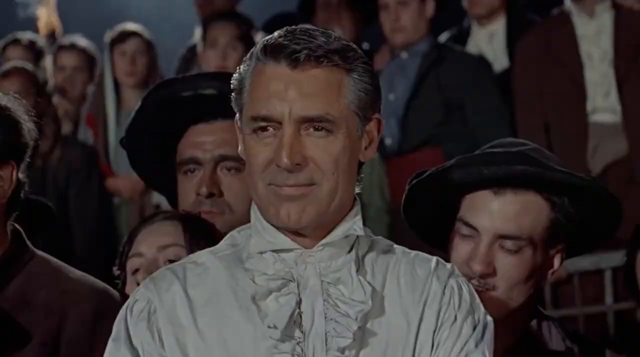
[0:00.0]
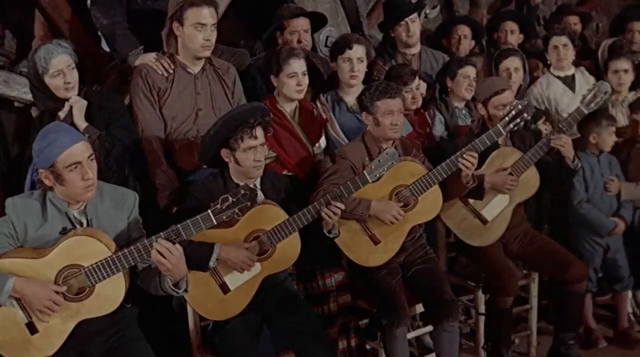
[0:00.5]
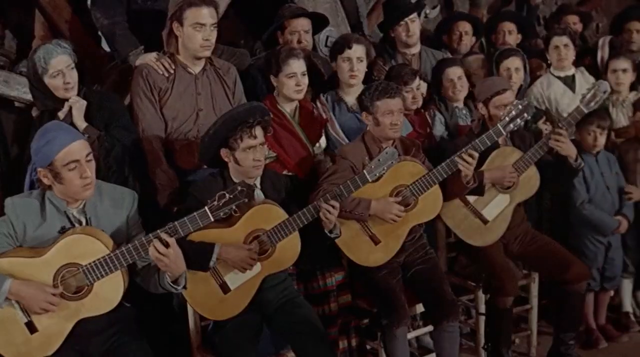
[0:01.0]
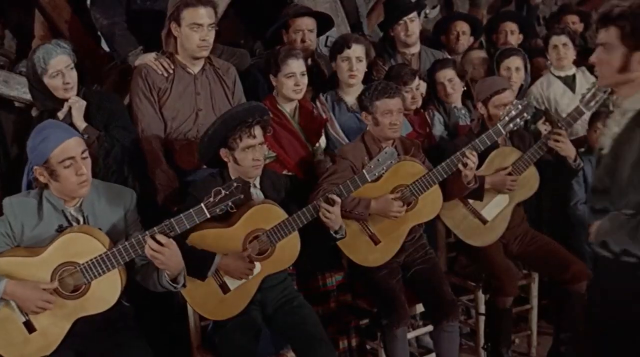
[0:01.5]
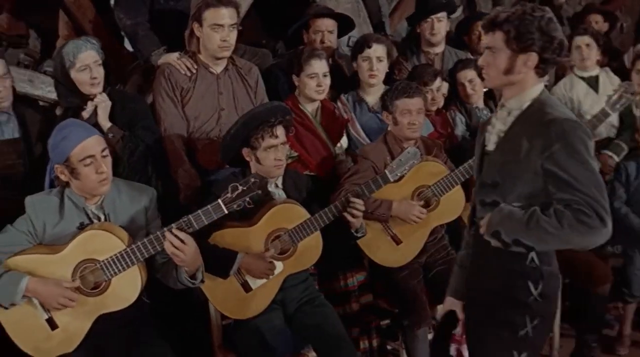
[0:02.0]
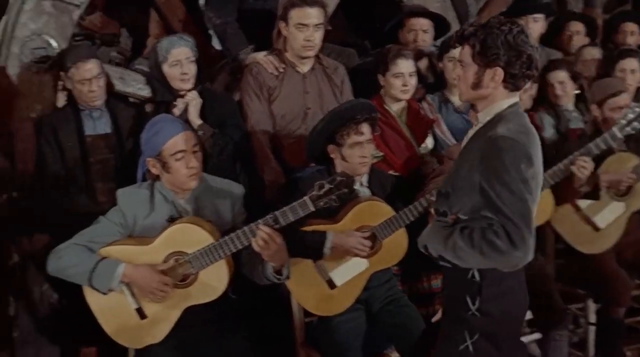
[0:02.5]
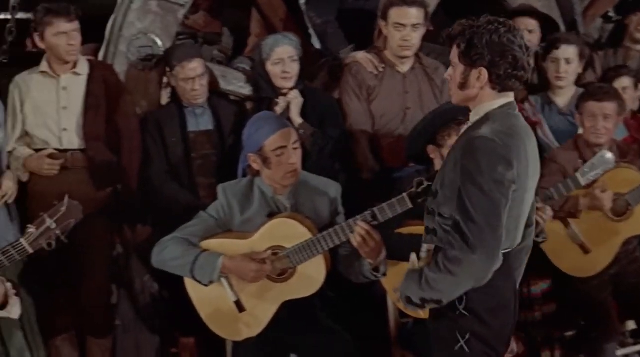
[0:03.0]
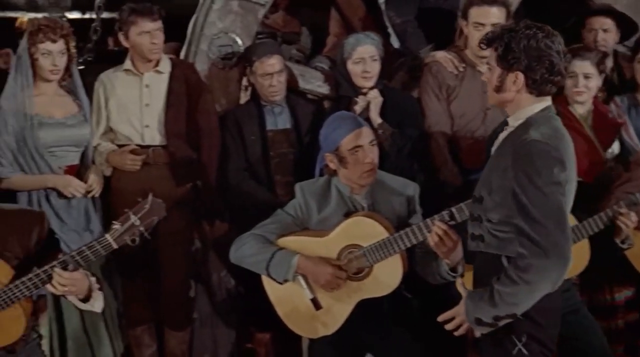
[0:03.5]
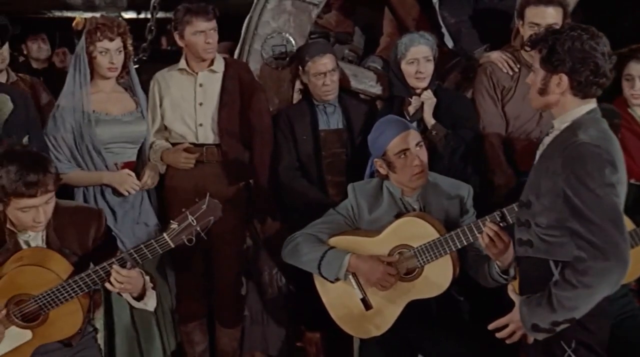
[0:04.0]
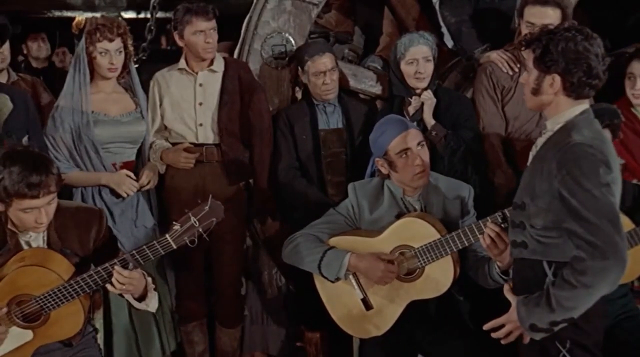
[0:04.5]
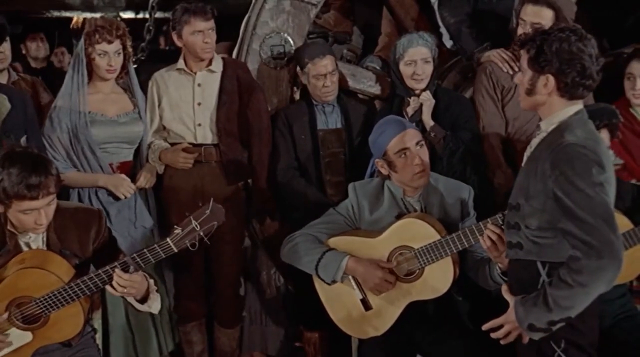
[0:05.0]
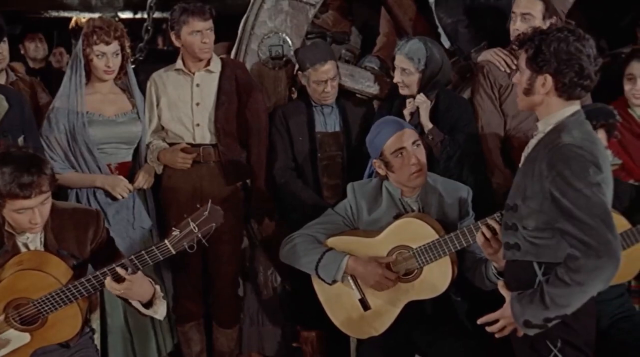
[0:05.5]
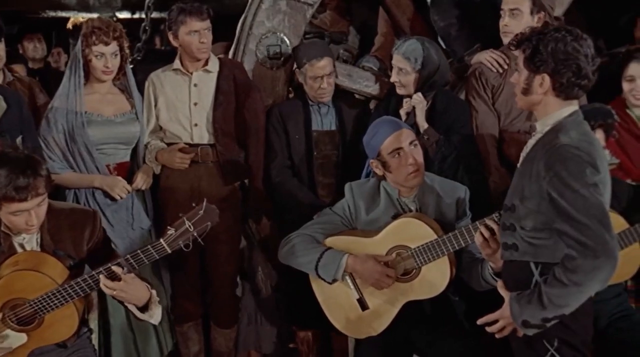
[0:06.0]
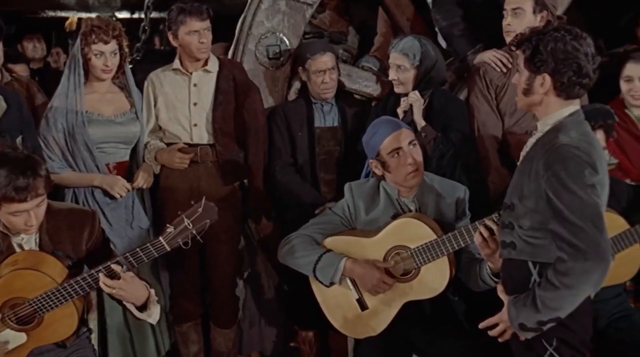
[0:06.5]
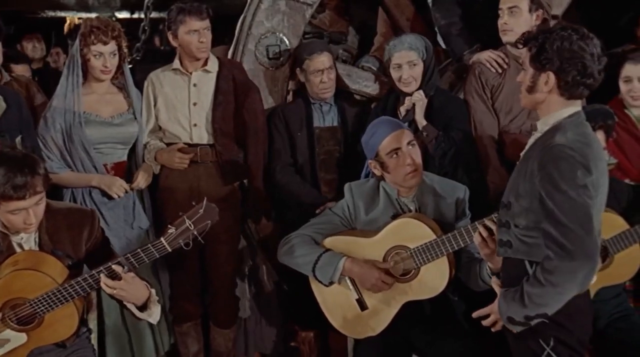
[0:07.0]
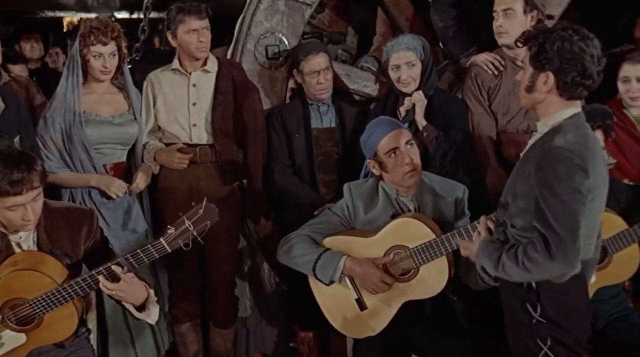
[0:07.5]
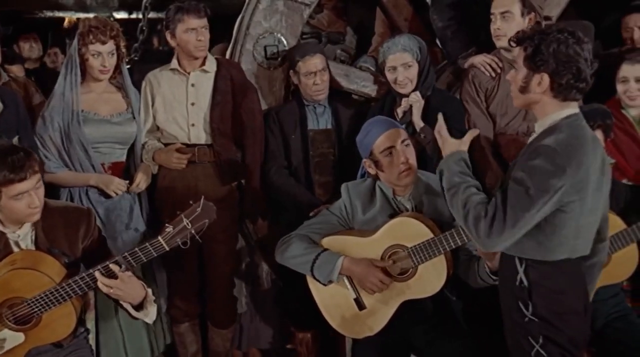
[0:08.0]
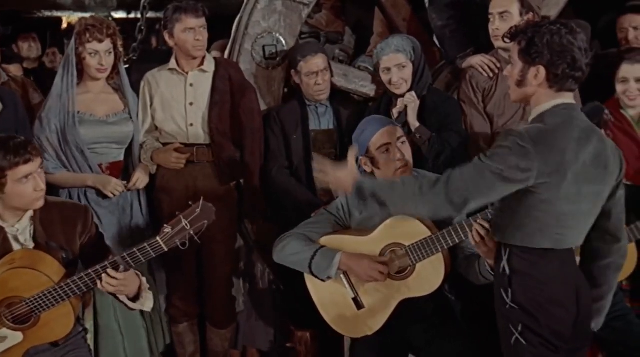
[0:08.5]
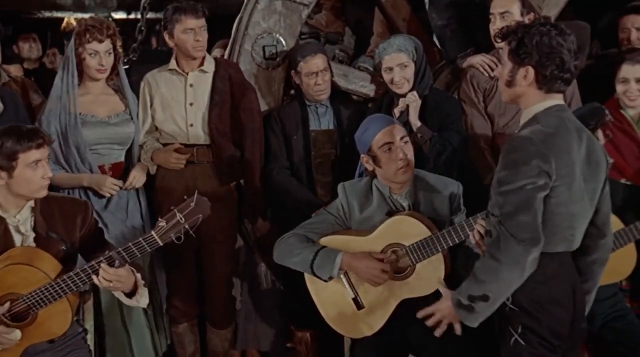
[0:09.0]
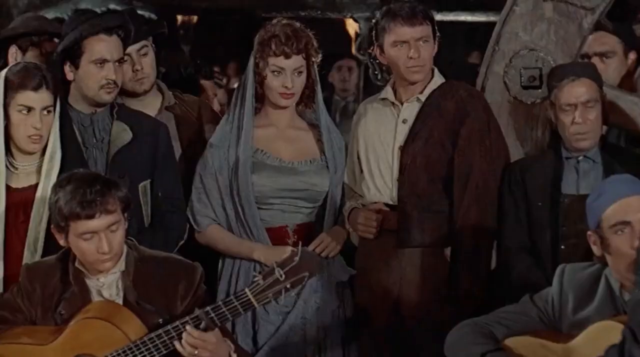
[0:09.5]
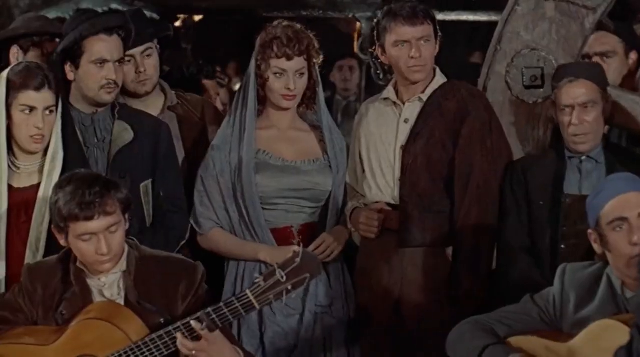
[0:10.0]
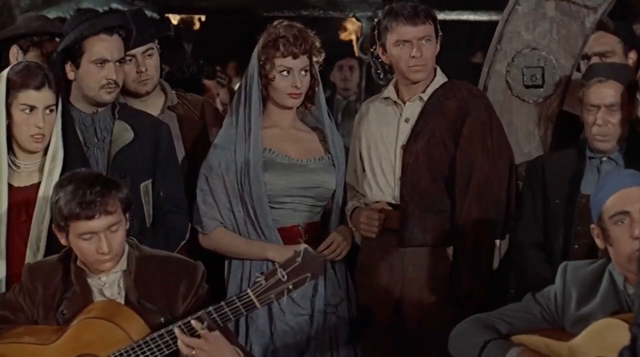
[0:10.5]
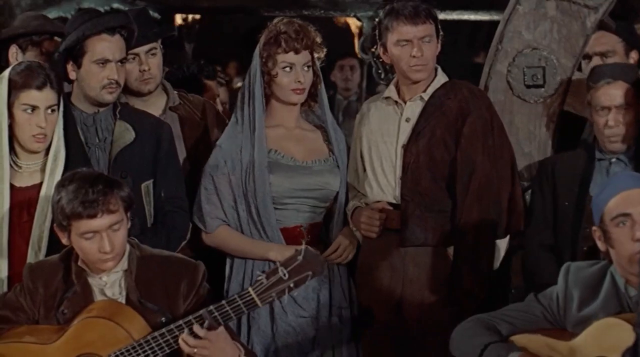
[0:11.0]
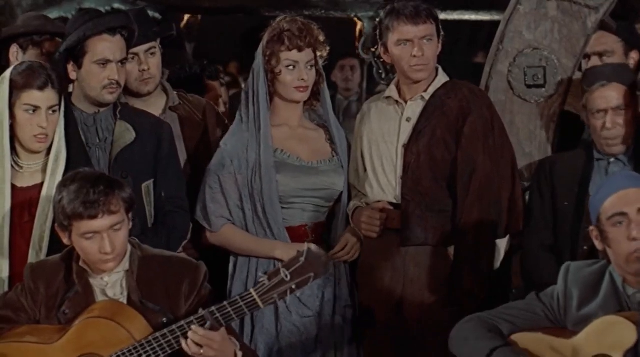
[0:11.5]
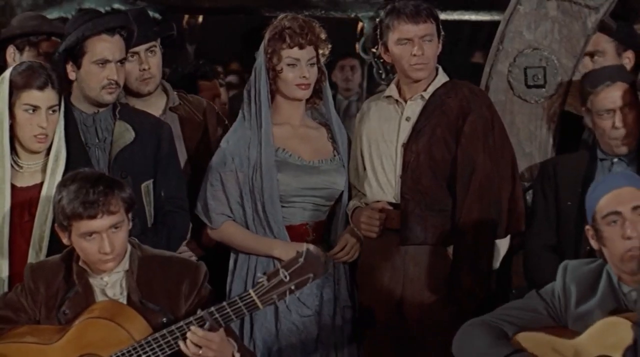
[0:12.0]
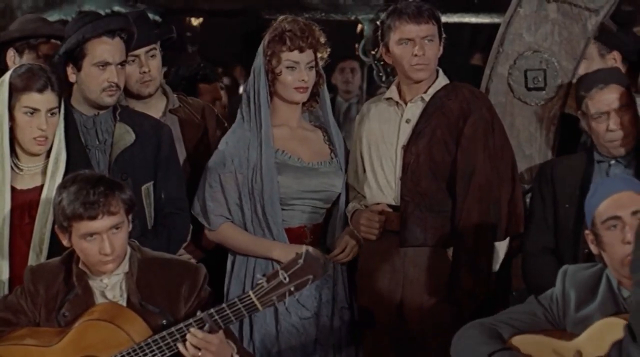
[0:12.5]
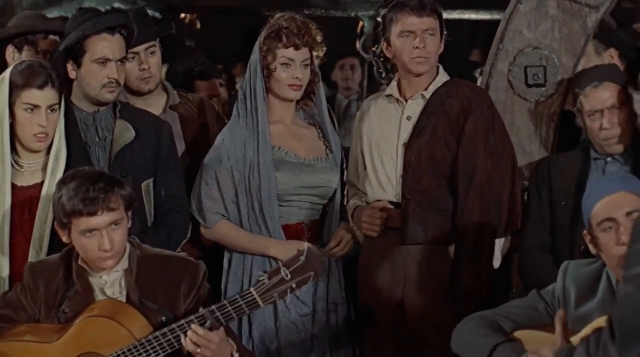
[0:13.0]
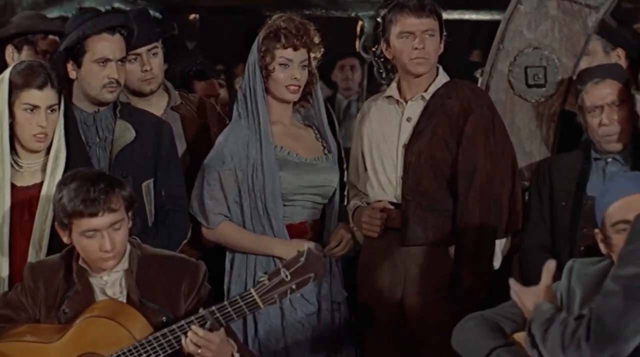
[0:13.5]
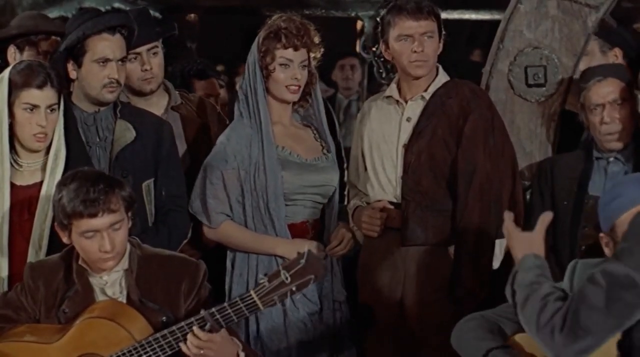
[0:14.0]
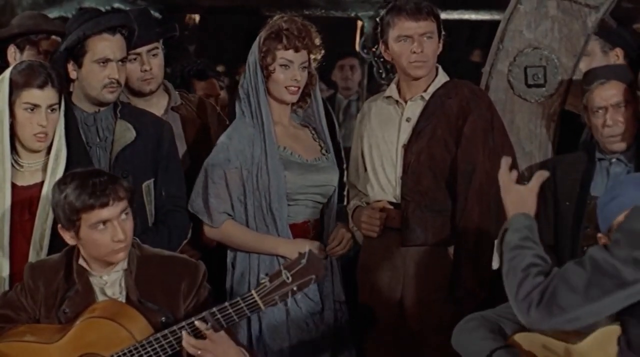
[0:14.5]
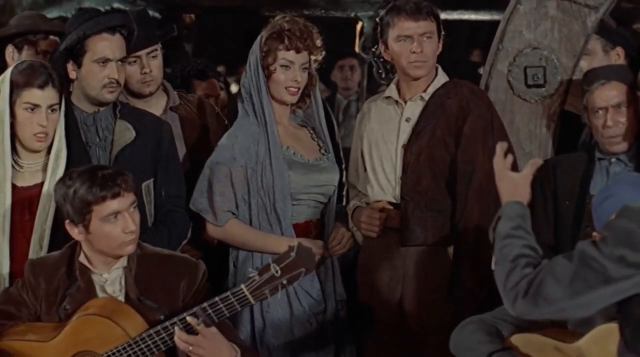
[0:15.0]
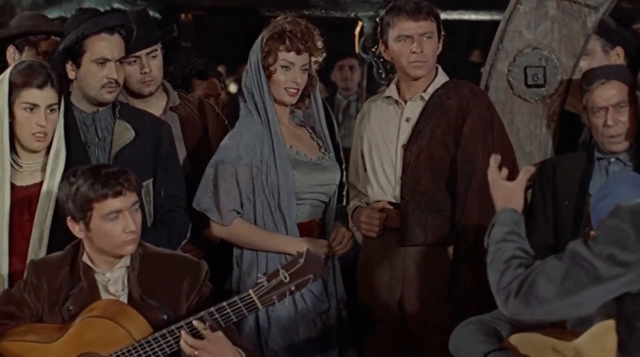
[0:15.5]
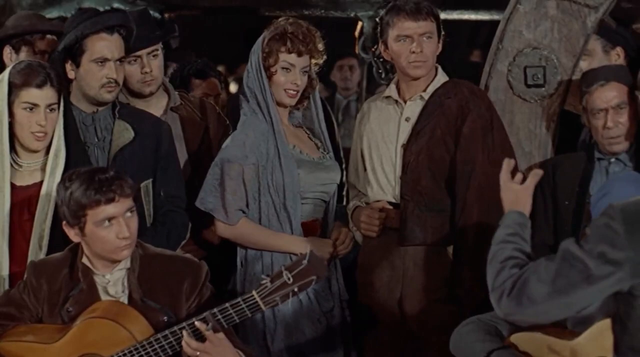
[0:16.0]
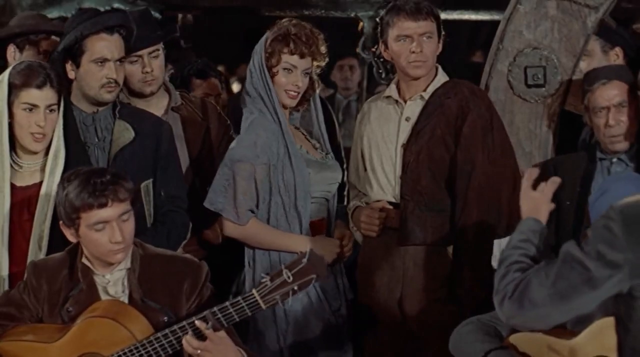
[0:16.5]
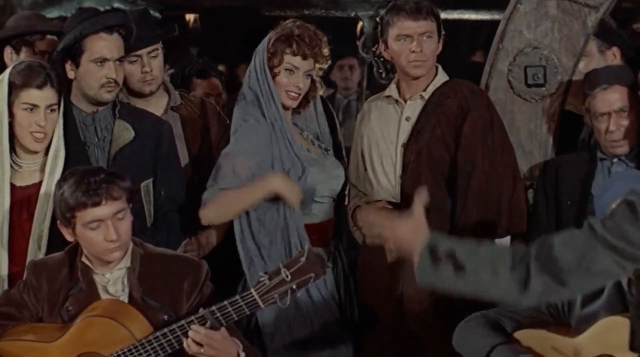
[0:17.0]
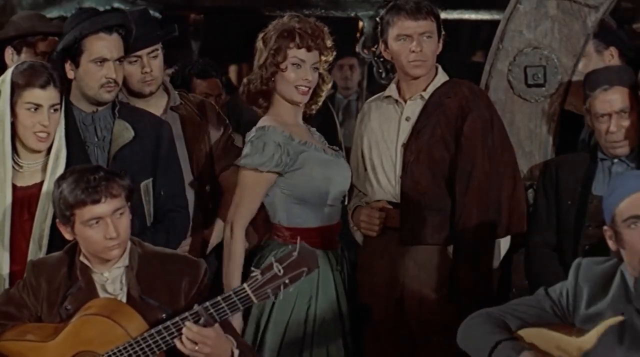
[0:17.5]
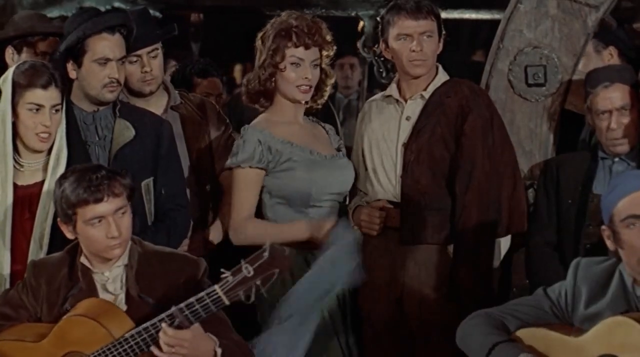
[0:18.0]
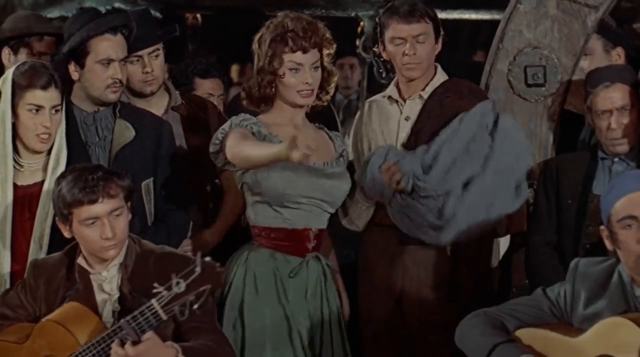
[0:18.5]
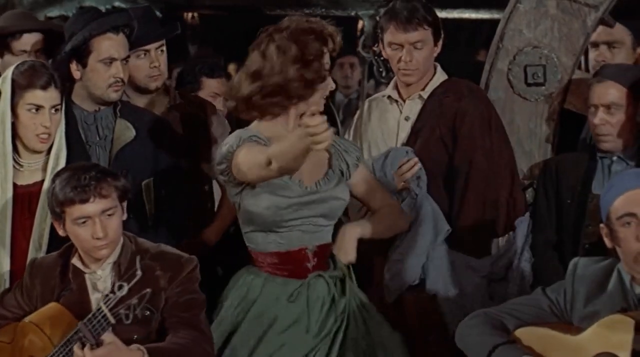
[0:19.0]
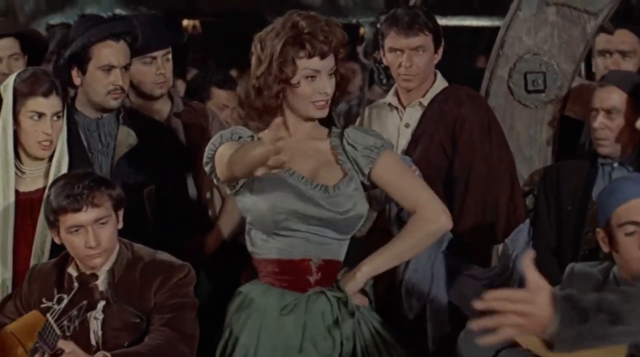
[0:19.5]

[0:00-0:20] The main character is a woman standing next to a man who is presumably her partner, and they are in a crowd among many other people. She stands out from those around her because she looks more affluent, or at least takes more care in her appearance. Guitars are being played. One man comes up to the woman and asks her to dance, and she joins in, looking a bit flirty and apparently quite happy to have the attention. Her partner does not look very pleased. As she joins in and is about to dance, the shot cuts to another man in the crowd who also looks fairly affluent; his facial expressions show he is quite happy with what he sees of the woman. The partner does not look happy at all with the situation.